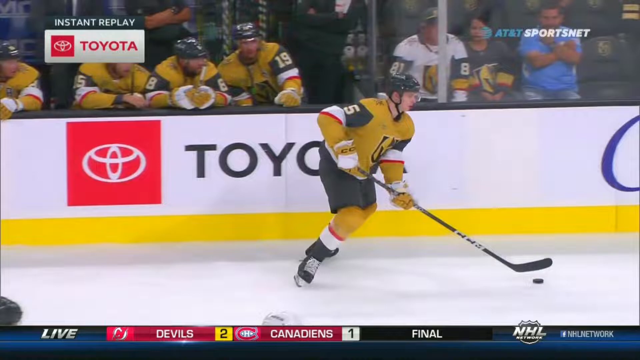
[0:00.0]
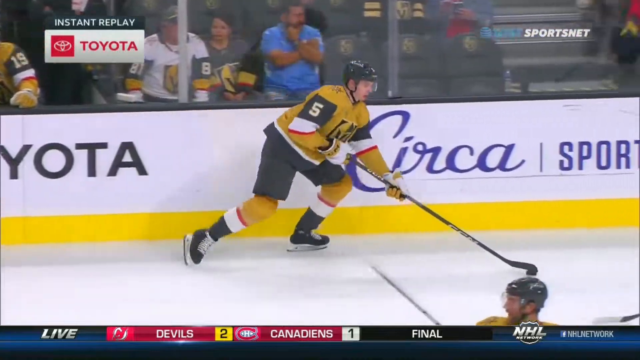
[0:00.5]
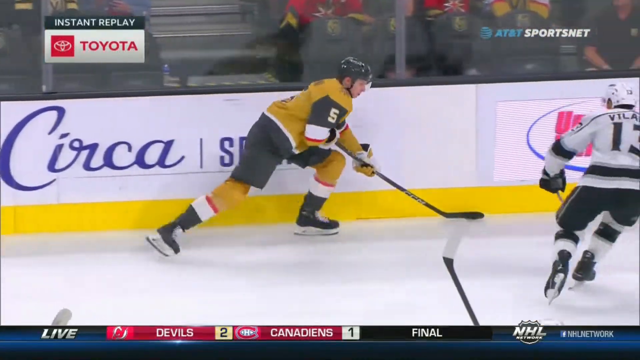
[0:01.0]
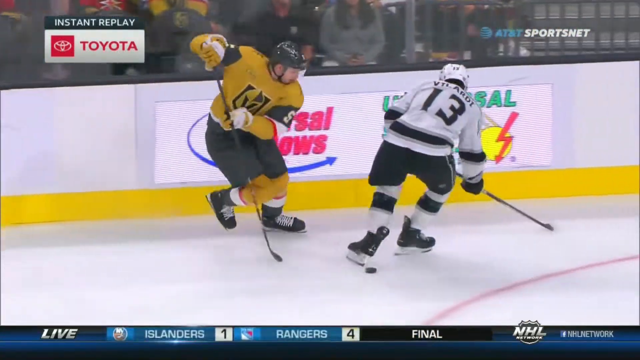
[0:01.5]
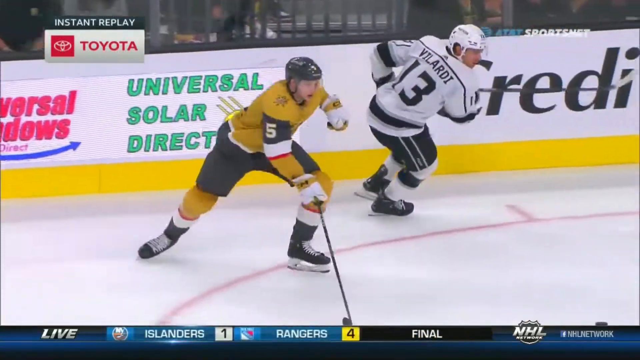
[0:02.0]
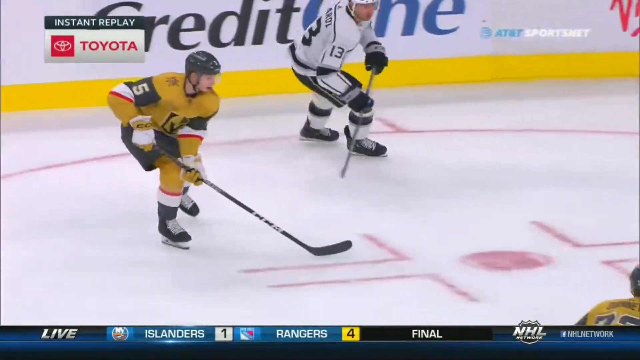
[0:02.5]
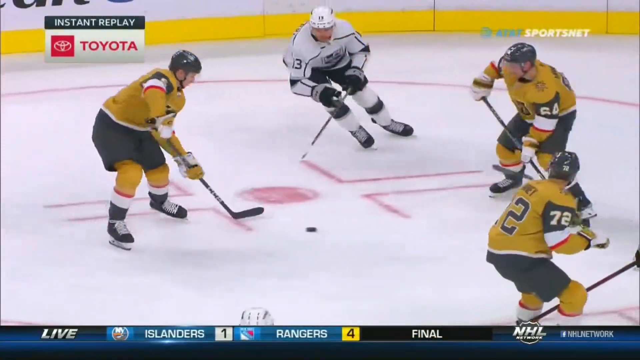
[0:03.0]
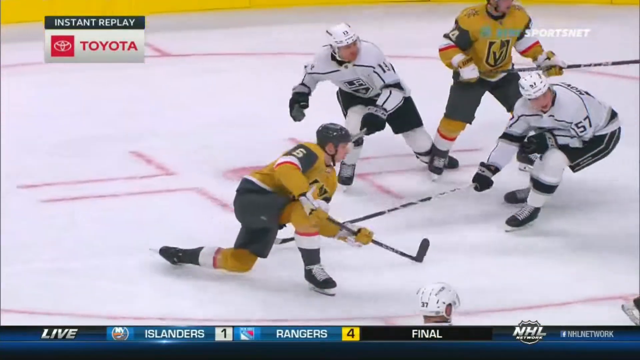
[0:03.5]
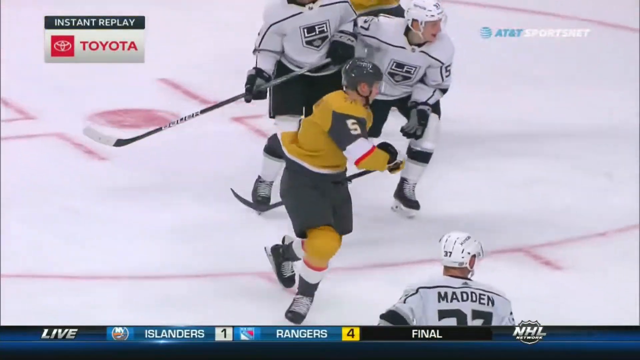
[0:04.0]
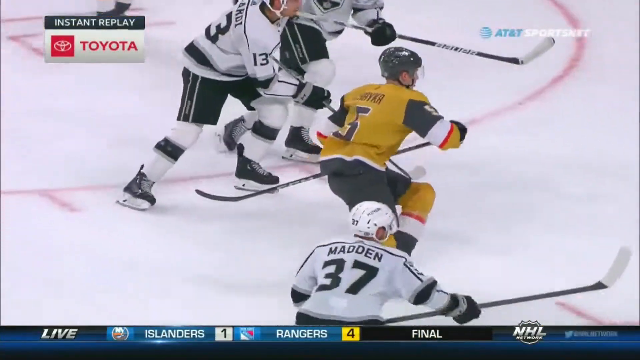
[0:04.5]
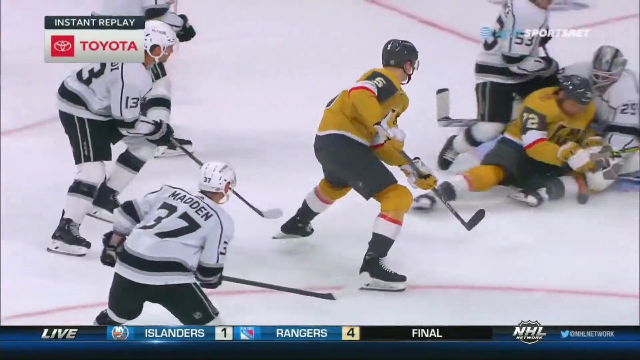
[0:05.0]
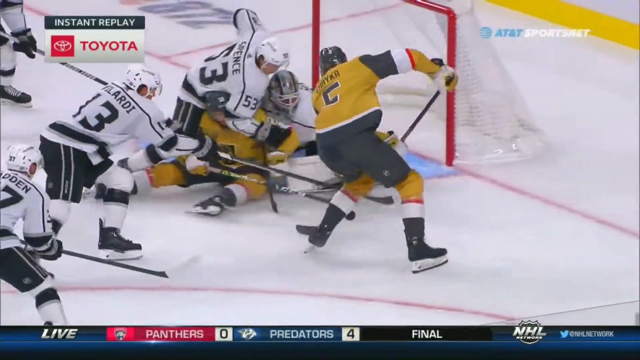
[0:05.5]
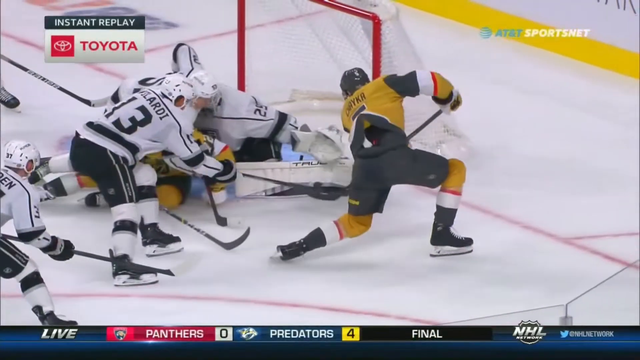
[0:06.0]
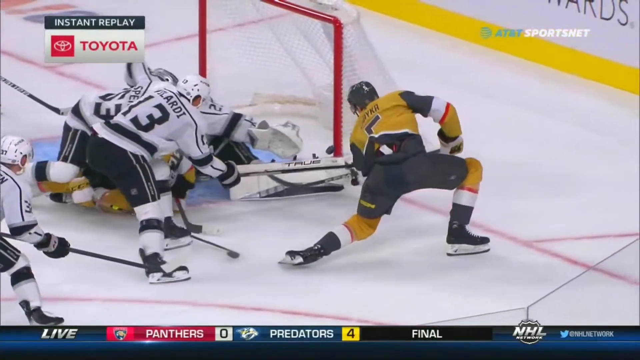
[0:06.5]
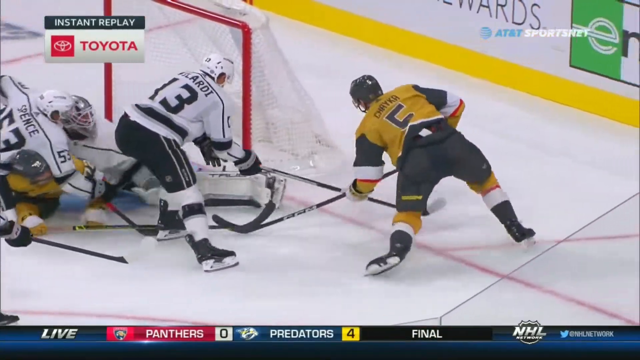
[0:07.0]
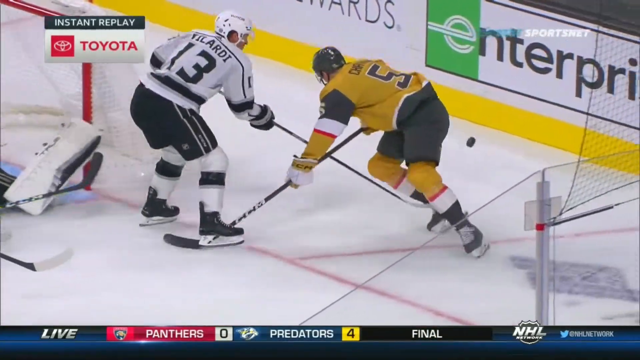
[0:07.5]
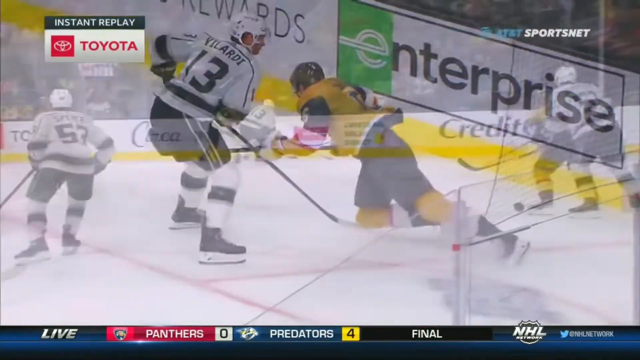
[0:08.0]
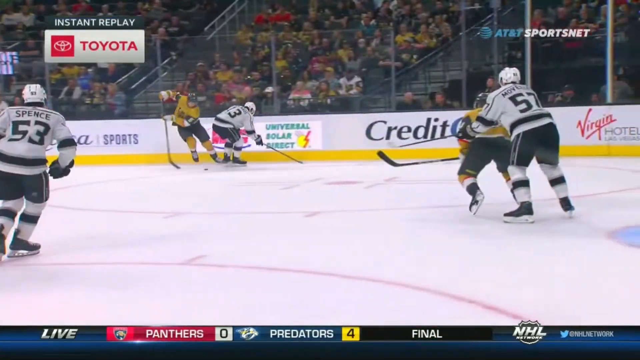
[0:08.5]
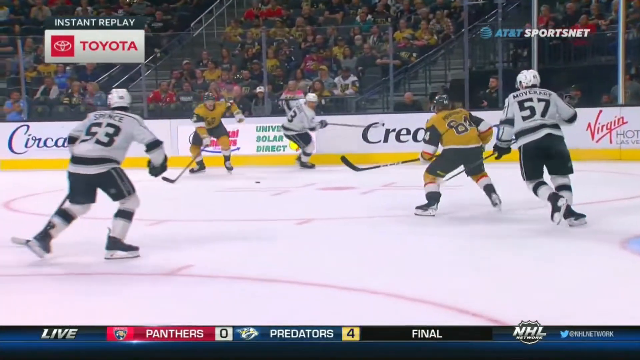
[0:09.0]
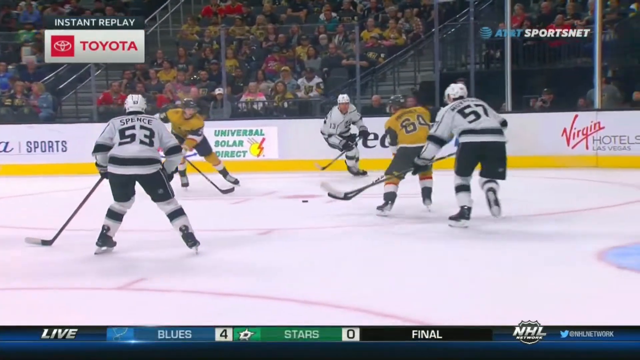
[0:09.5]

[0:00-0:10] An instant replay sponsored by Toyota plays from an ice hockey game, with Toyota awnings in the background. A yellow team plays a white team. The white team appears to have "LA" on them, suggesting they are from Los Angeles, while the yellow team's identity is unclear. Number 5 takes the puck from maybe about halfway and attempts to score, but there is a massive pile of players in front of the goal, and when he shoots, the puck rebounds off and behind the net.